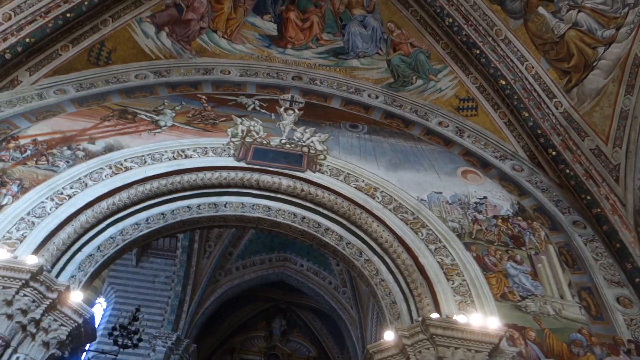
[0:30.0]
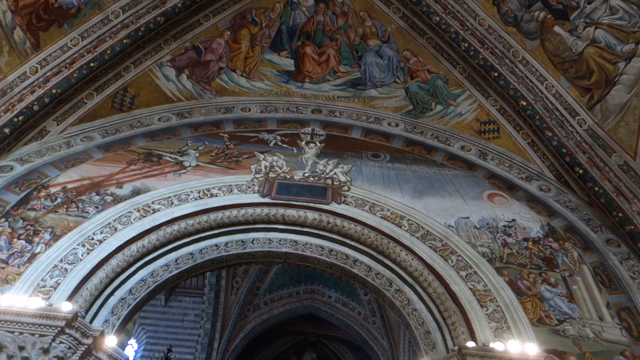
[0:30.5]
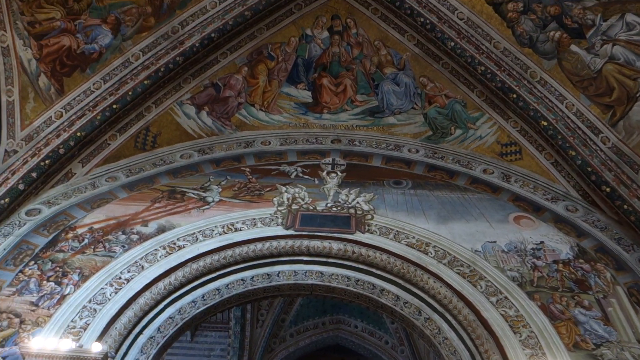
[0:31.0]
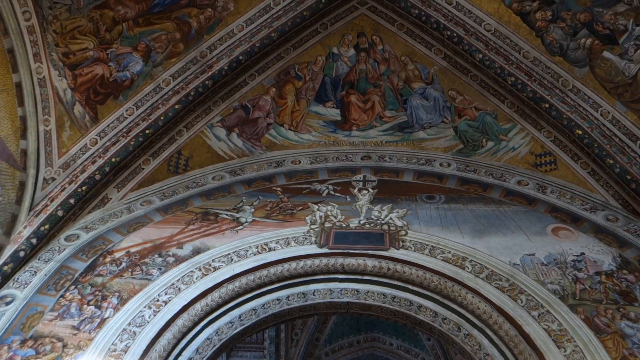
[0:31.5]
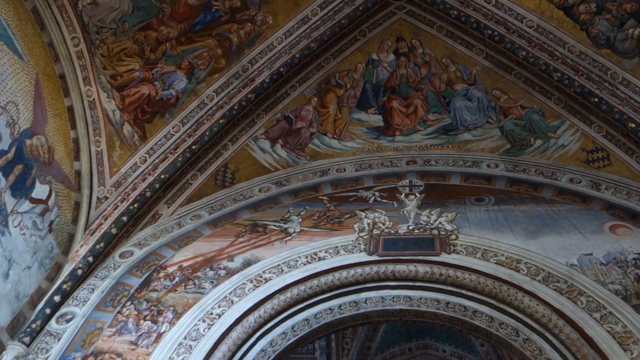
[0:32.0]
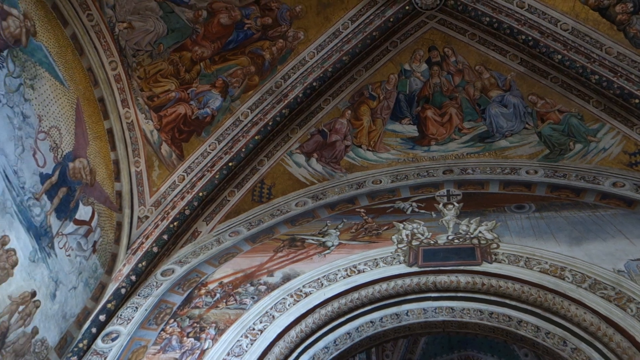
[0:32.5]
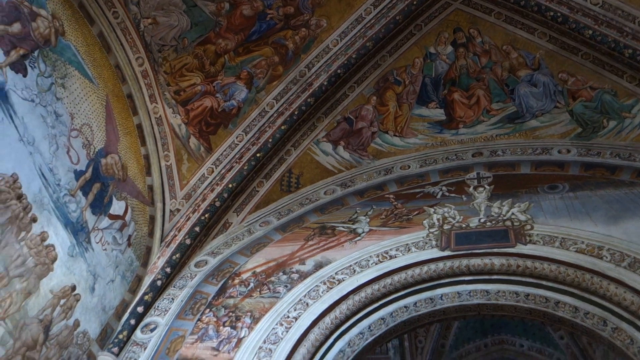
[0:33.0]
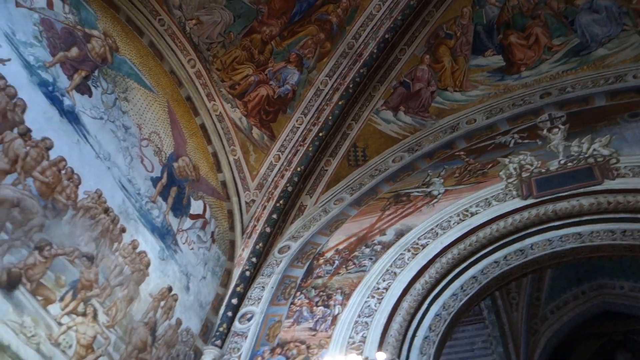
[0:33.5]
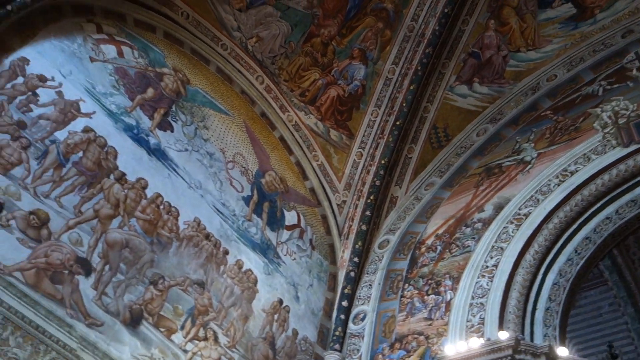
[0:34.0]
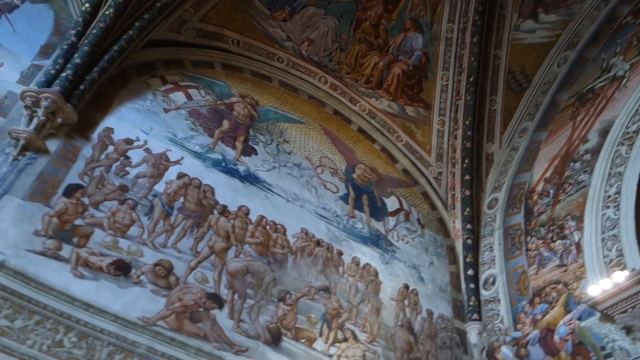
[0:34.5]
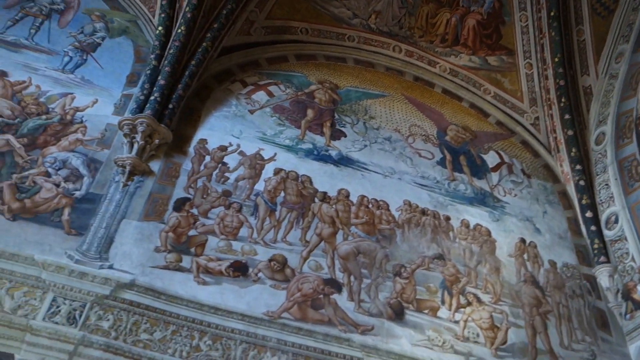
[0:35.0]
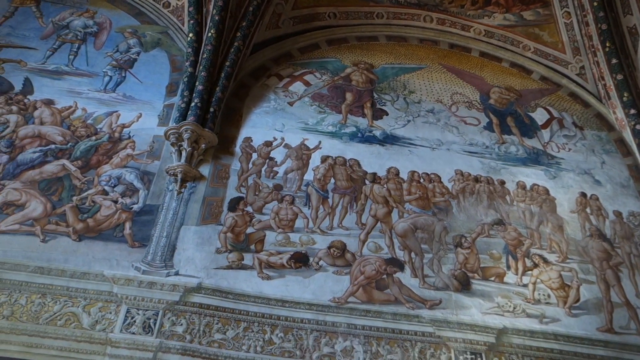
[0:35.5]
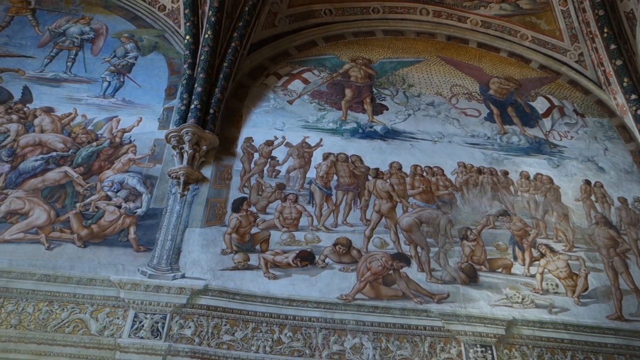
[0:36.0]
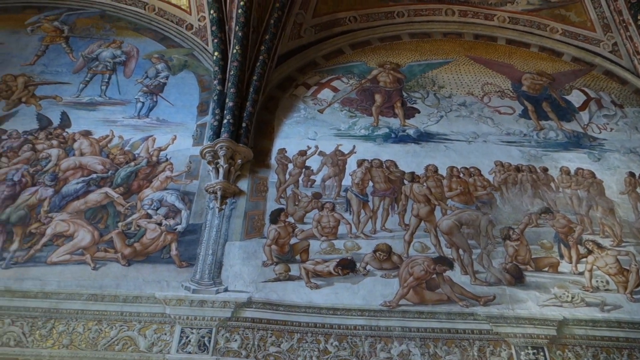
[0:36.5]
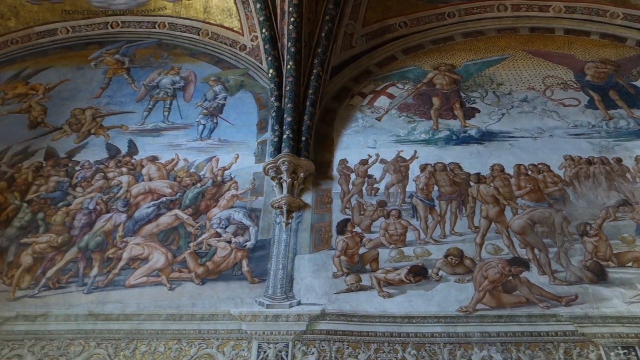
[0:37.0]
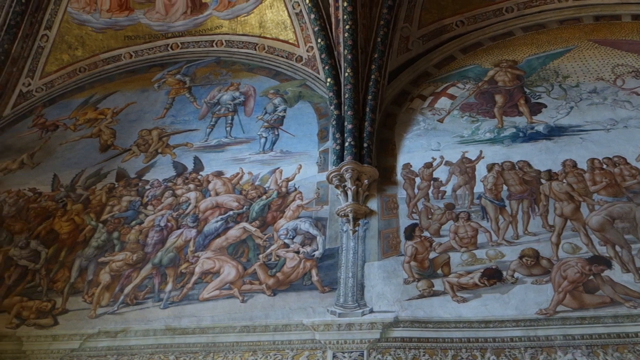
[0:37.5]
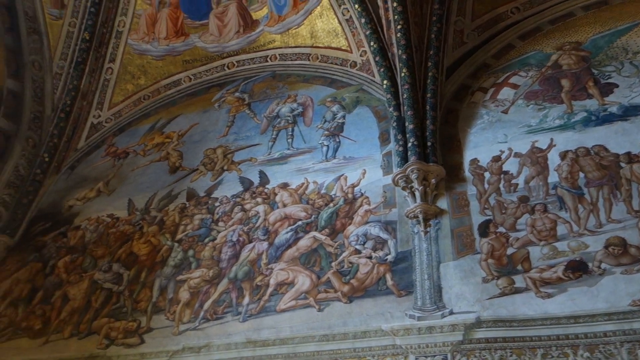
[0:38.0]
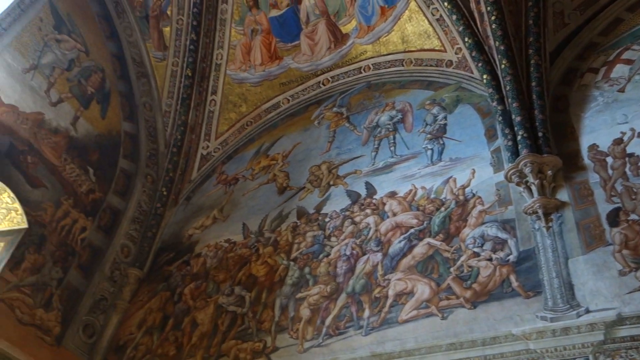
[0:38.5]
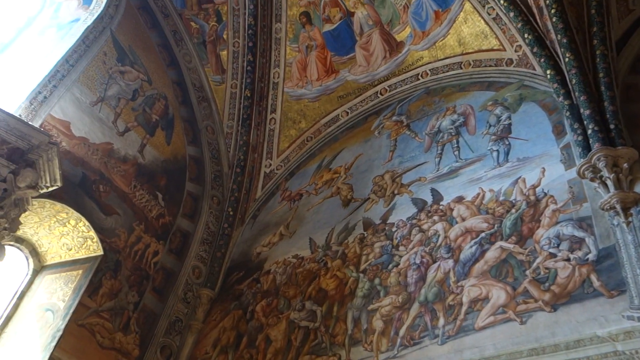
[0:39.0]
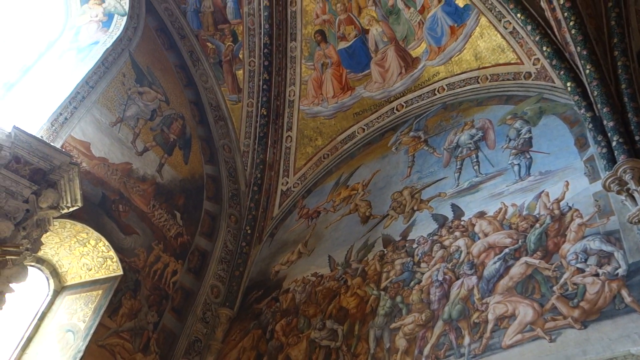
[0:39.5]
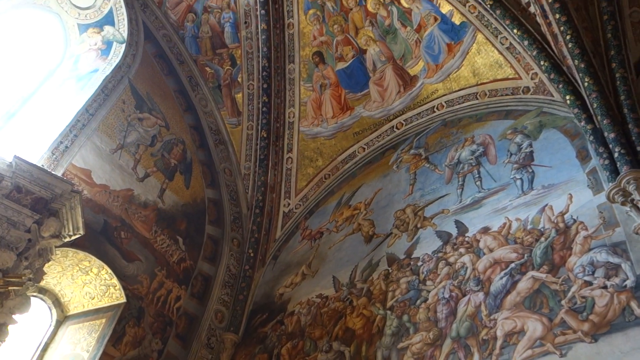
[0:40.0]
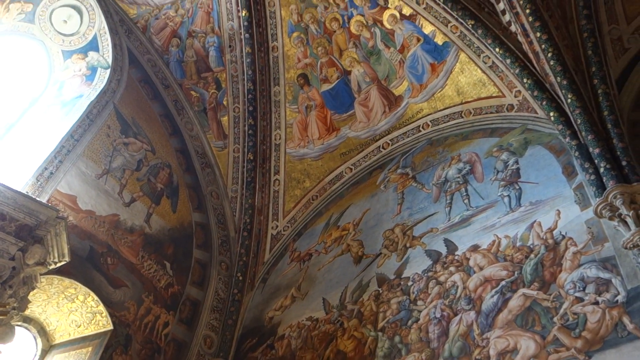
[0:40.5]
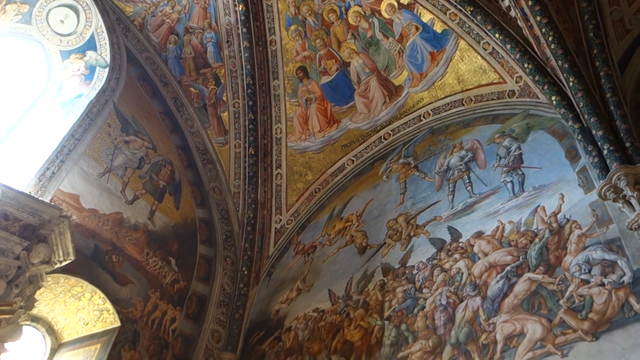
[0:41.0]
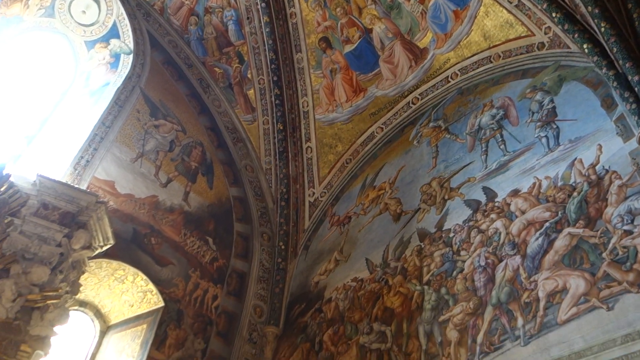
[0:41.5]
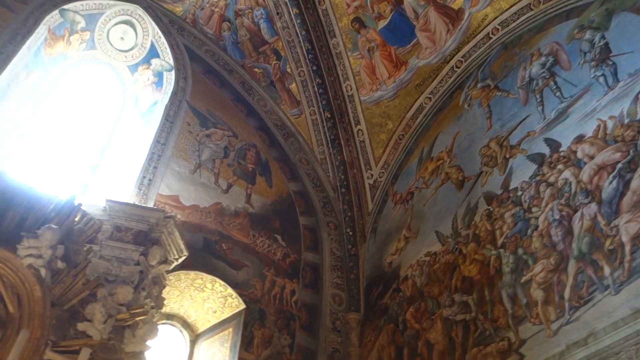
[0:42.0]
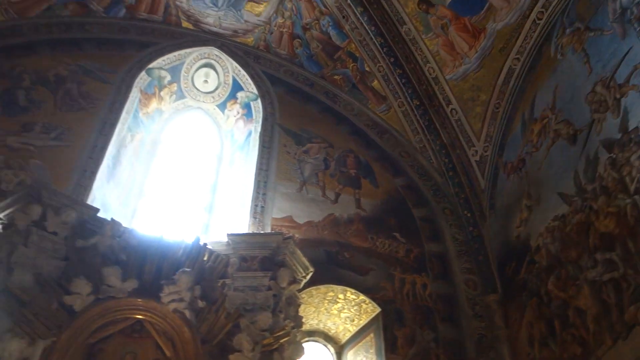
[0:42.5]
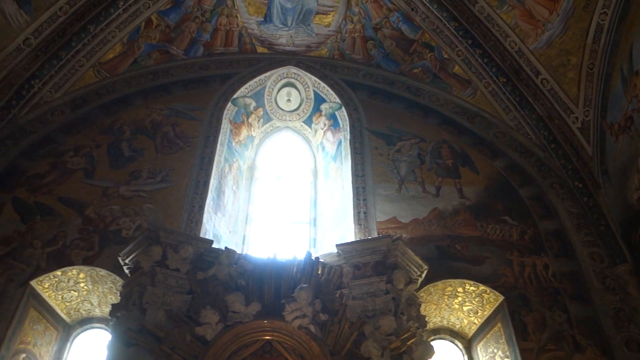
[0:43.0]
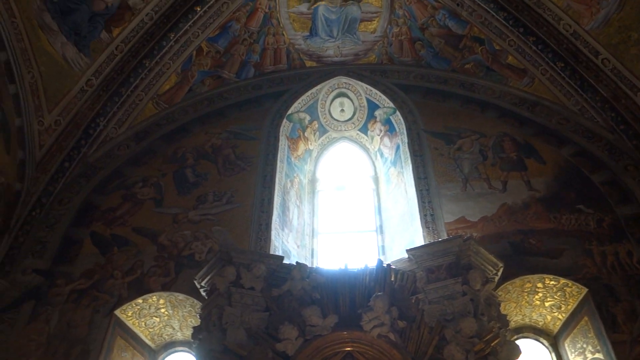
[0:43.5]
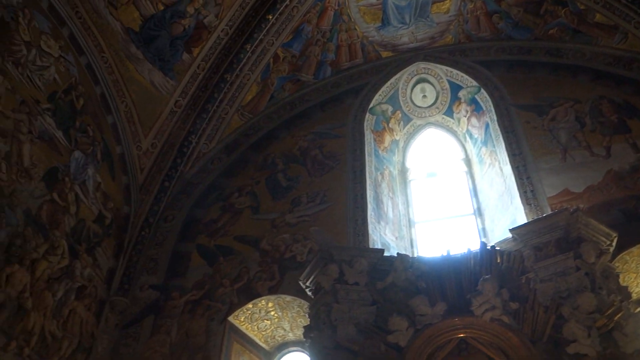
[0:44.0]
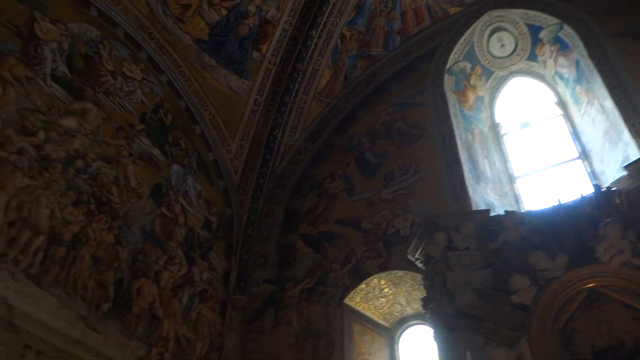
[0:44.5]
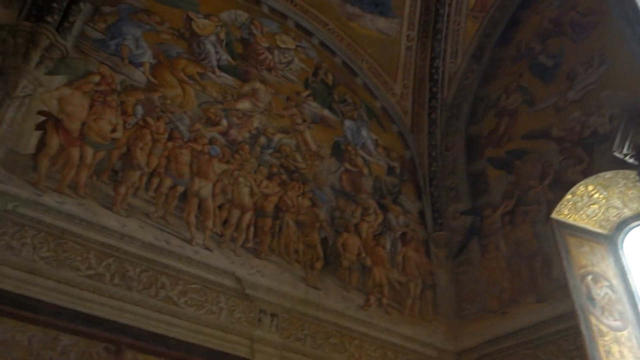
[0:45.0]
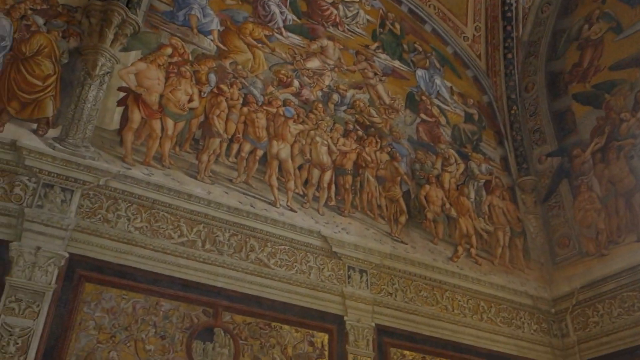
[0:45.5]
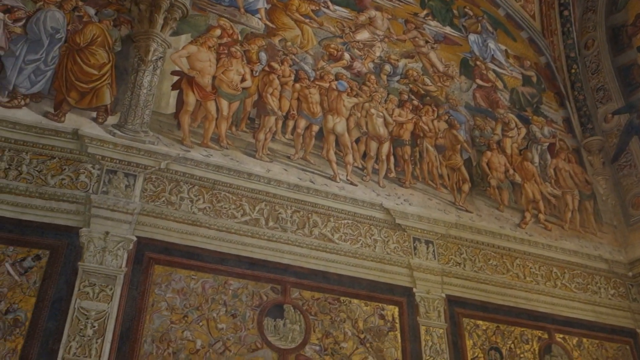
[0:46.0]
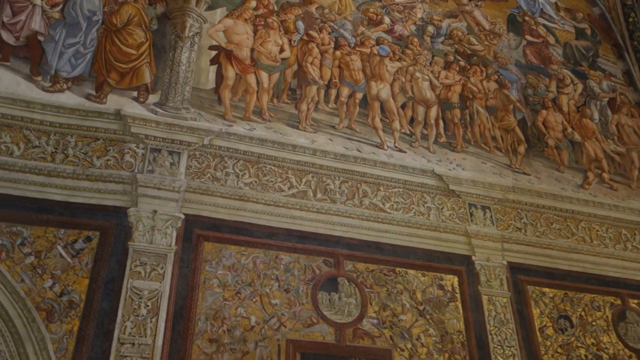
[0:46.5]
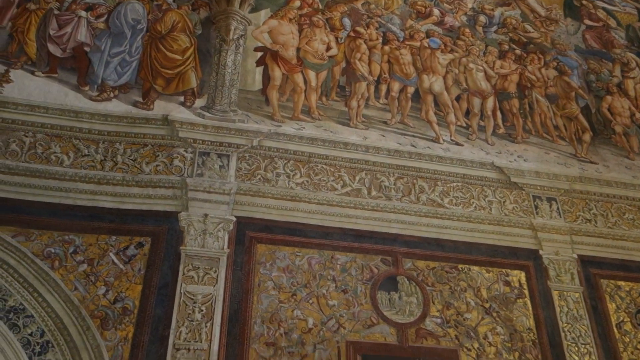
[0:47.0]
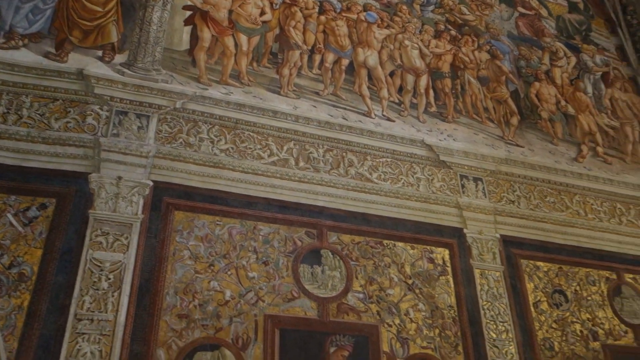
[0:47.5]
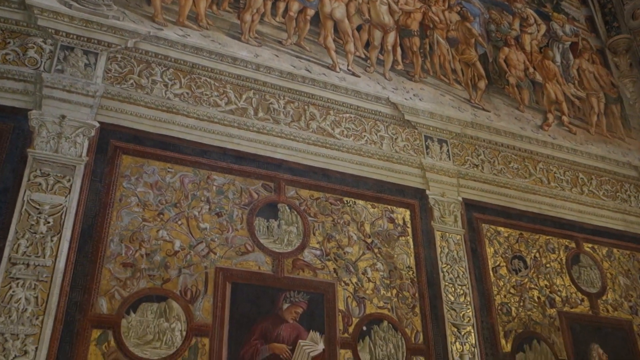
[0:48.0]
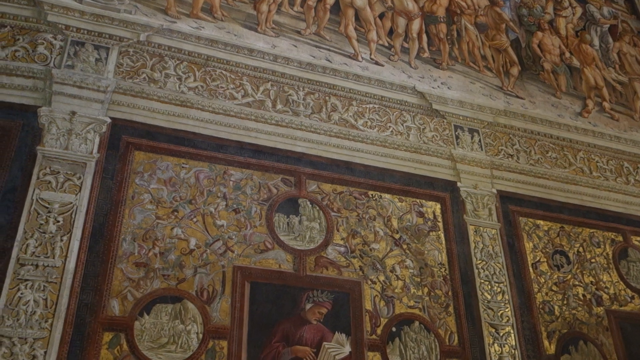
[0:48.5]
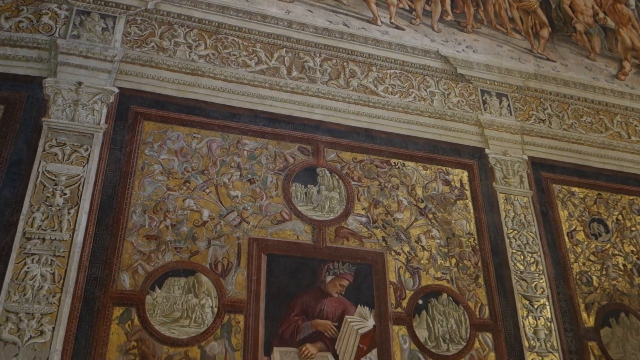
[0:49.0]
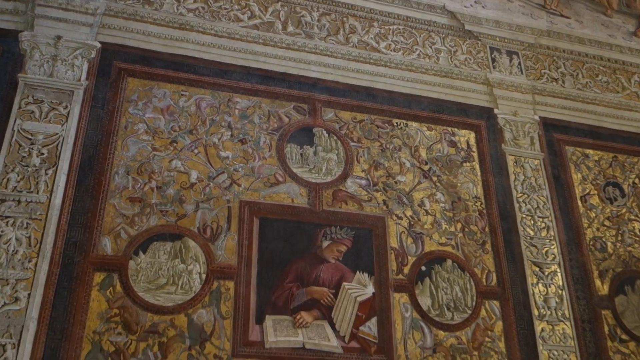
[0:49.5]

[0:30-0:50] The camera continues to pan around the ceiling of the cathedral, which is covered with many images. Across an archway is Jesus on a cross. There is an image of someone reading a book, and many of the images include naked people. The images have lots of colors, such as blue, green, yellows, reds and white. The camera pans the ceilings and walls as bright light pours in from the stained glass windows. The walls have intricate drawings in them. There is a blue rectangle on an archway; over it is presumably an image of Jesus, and over that is a cross with a circle around it. There are many flying images and many triangles. There is possibly an image of the Hunchback of Notre Dame. There is an image of Jesus holding a basket while sitting down, and there are many ornate decorations.